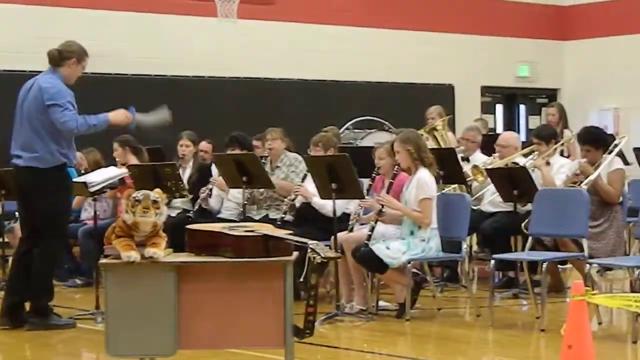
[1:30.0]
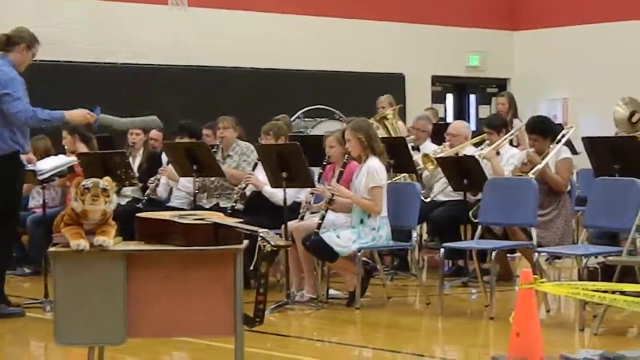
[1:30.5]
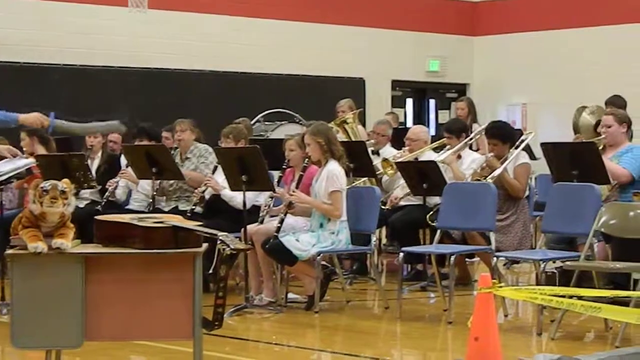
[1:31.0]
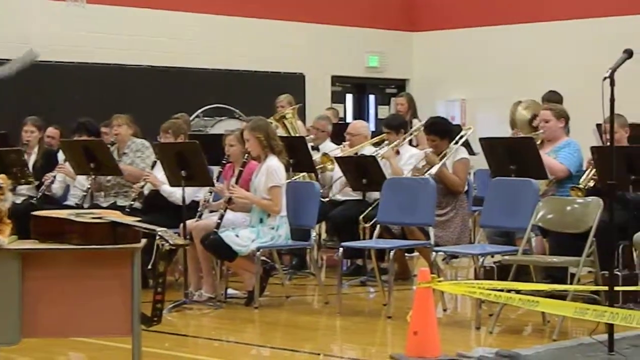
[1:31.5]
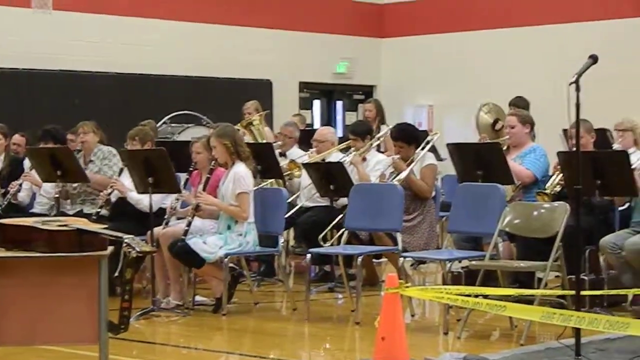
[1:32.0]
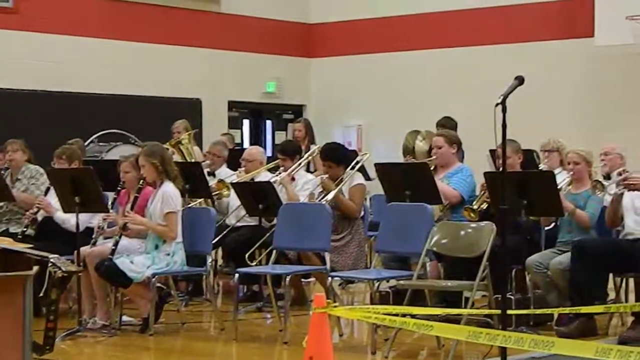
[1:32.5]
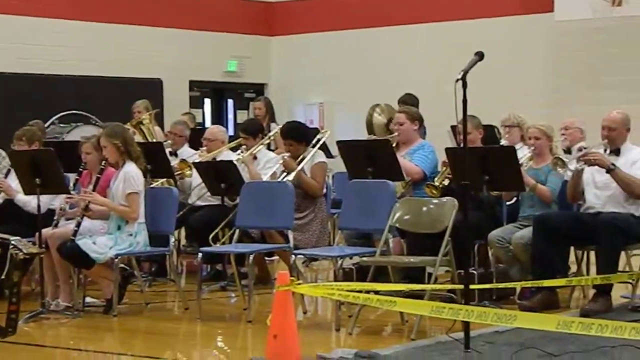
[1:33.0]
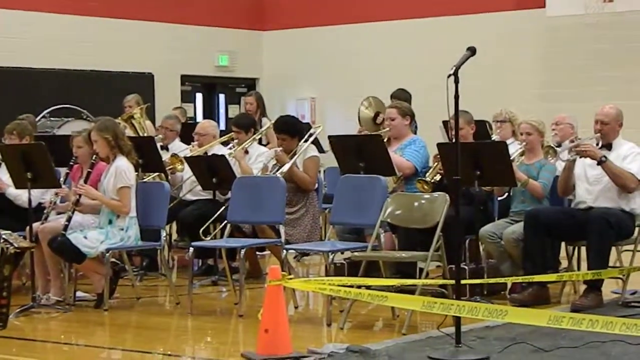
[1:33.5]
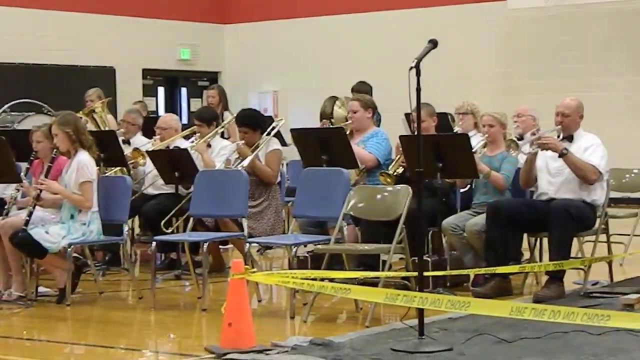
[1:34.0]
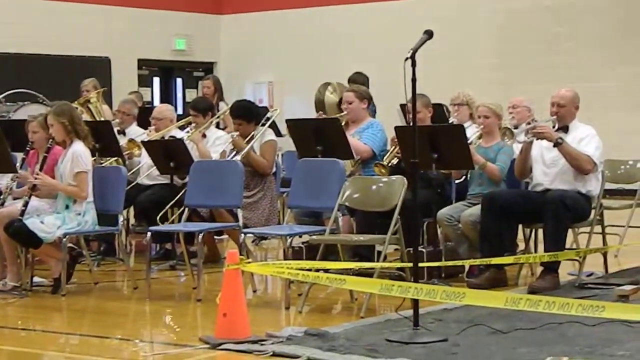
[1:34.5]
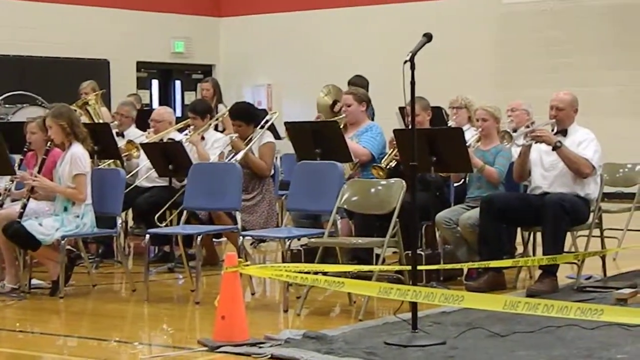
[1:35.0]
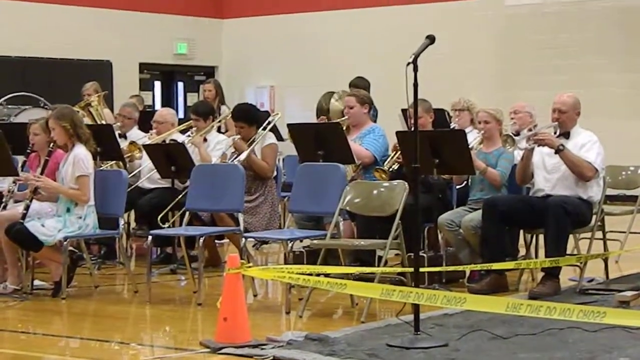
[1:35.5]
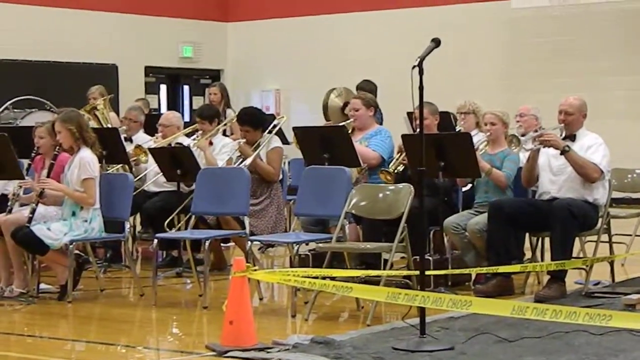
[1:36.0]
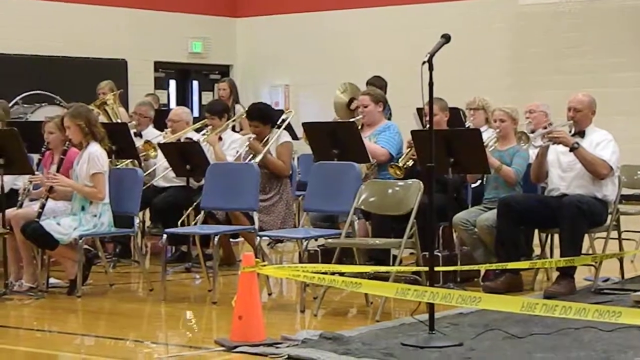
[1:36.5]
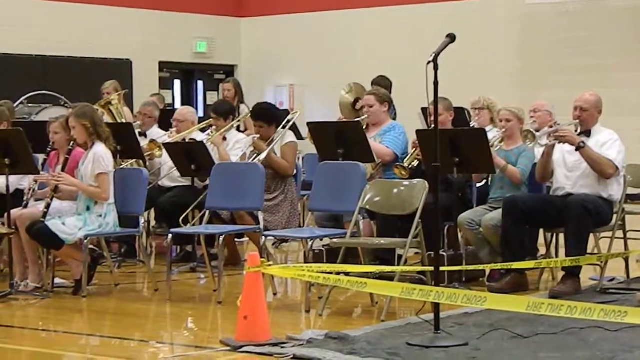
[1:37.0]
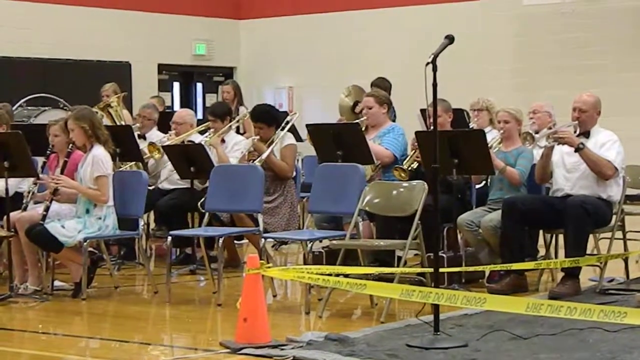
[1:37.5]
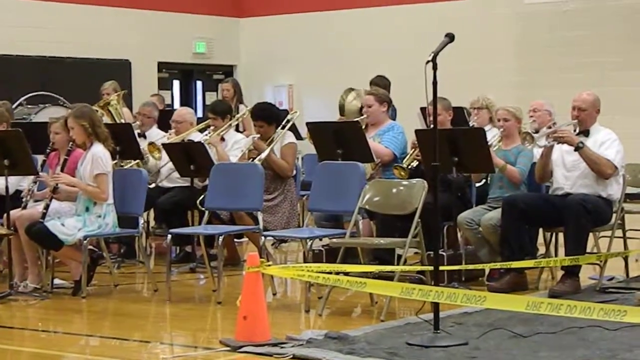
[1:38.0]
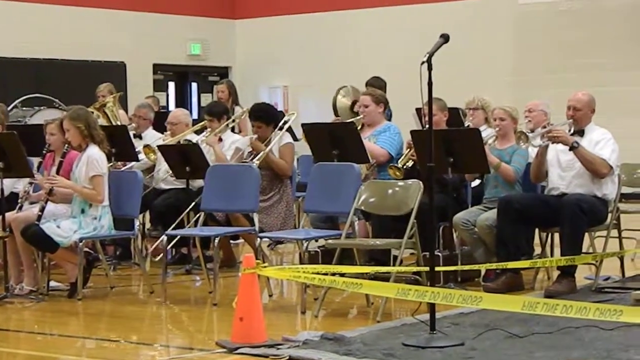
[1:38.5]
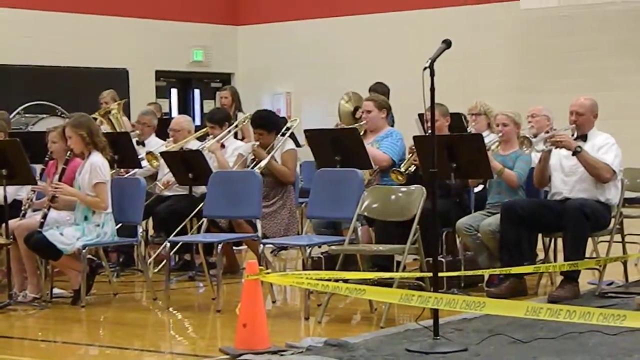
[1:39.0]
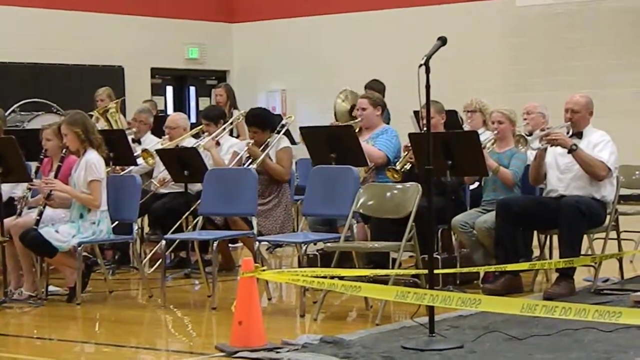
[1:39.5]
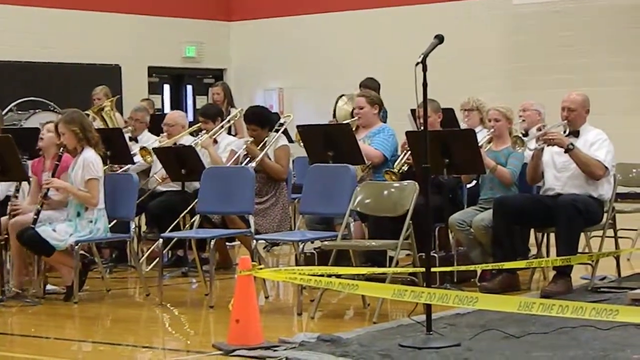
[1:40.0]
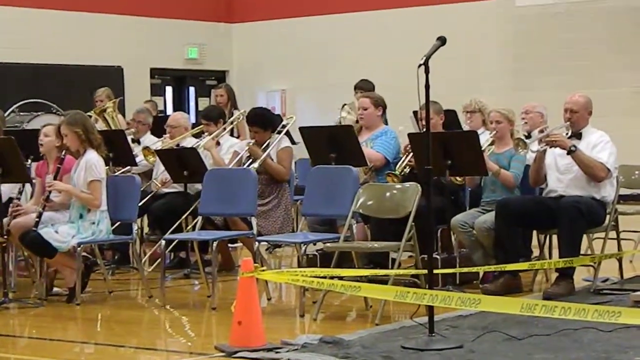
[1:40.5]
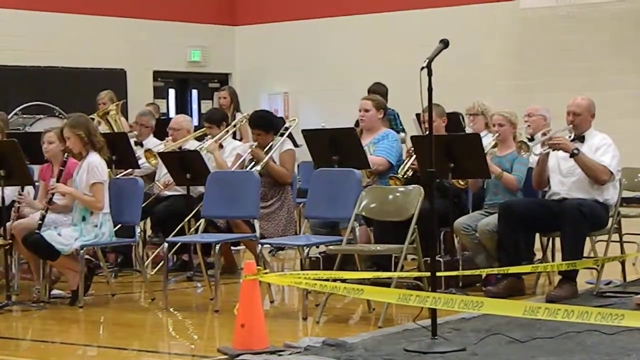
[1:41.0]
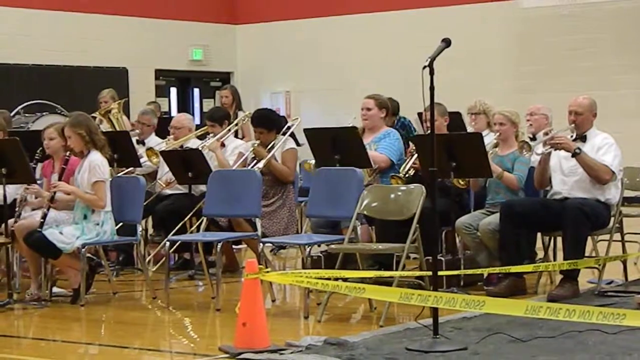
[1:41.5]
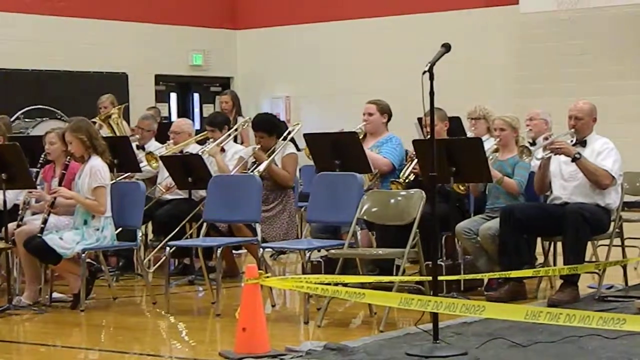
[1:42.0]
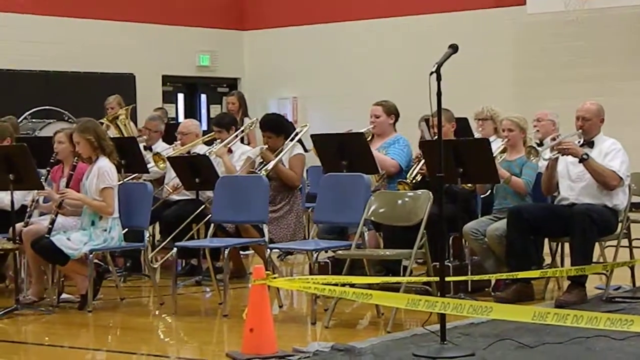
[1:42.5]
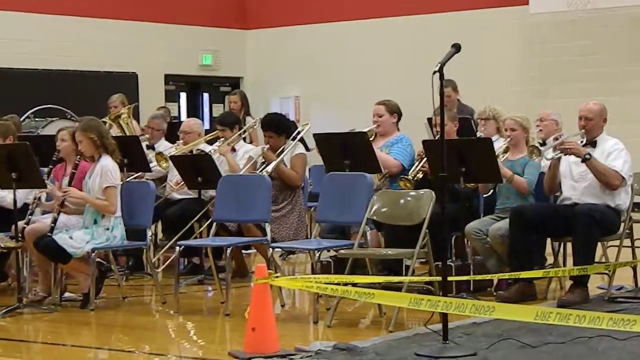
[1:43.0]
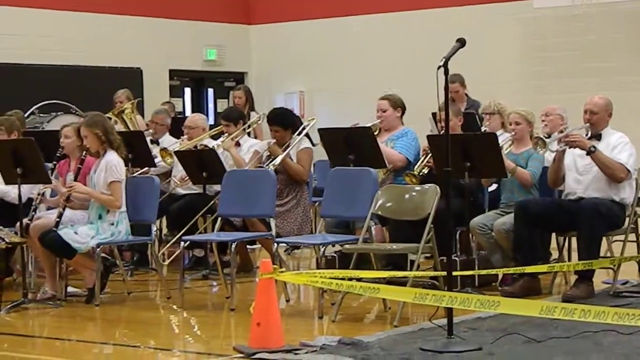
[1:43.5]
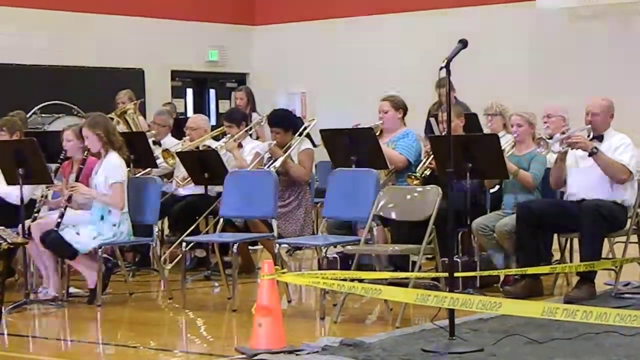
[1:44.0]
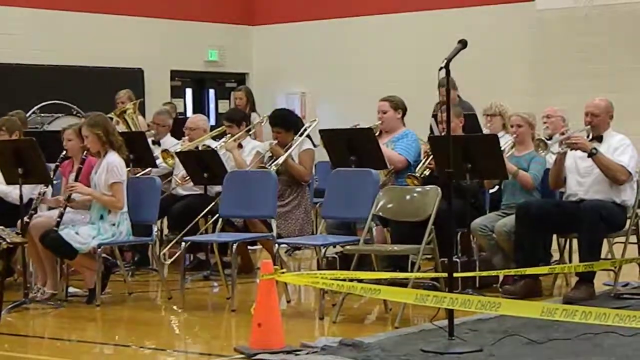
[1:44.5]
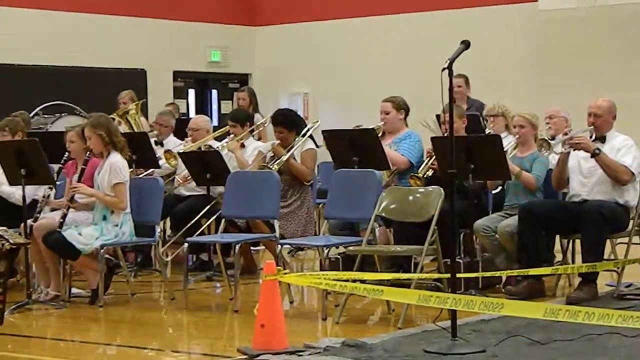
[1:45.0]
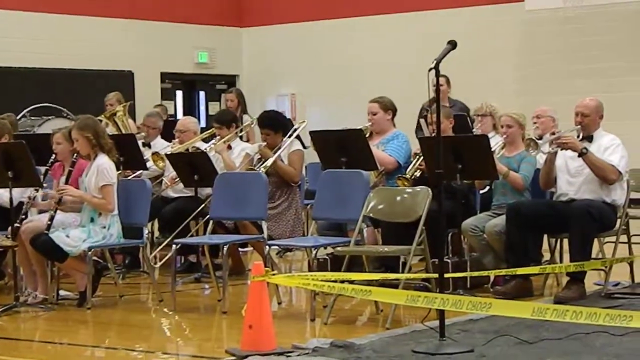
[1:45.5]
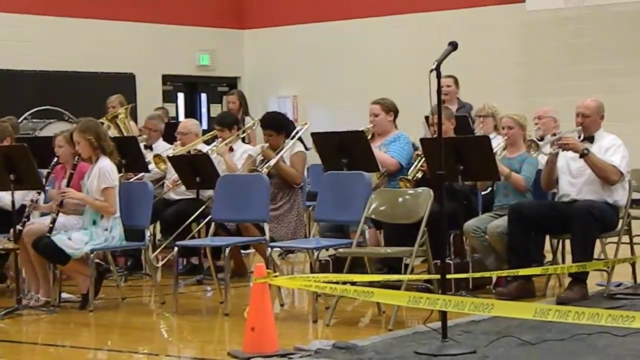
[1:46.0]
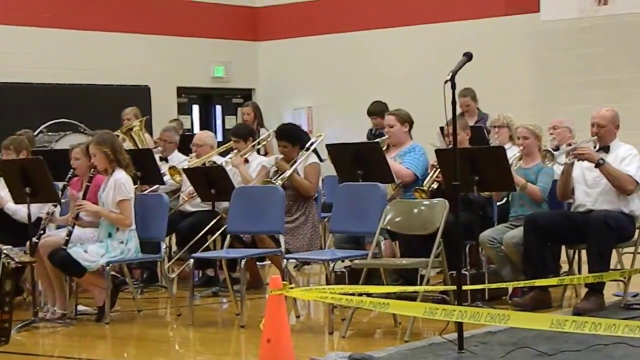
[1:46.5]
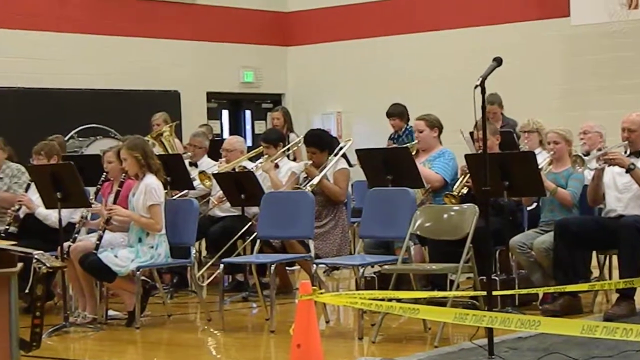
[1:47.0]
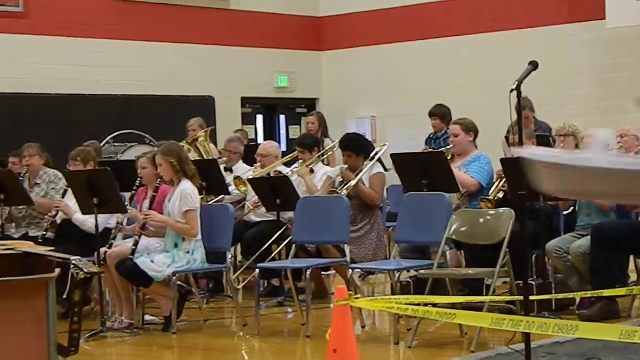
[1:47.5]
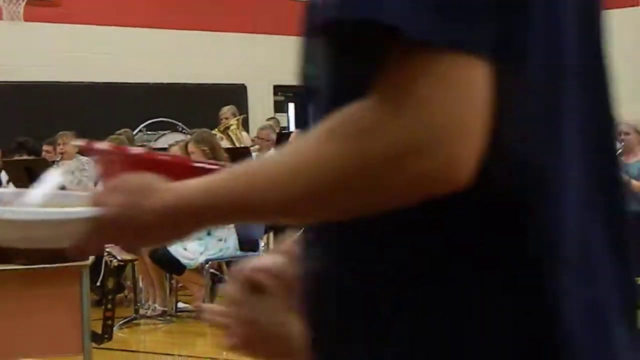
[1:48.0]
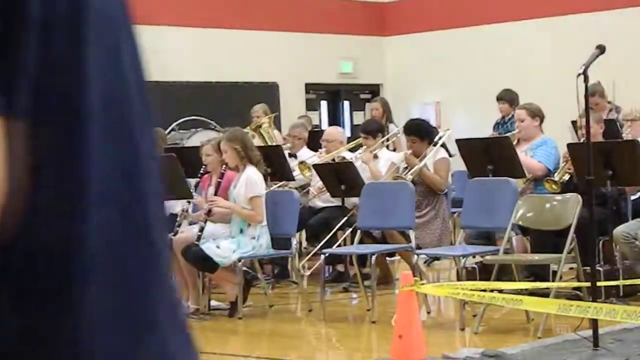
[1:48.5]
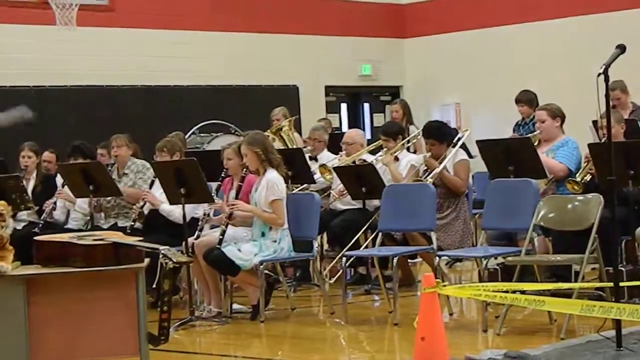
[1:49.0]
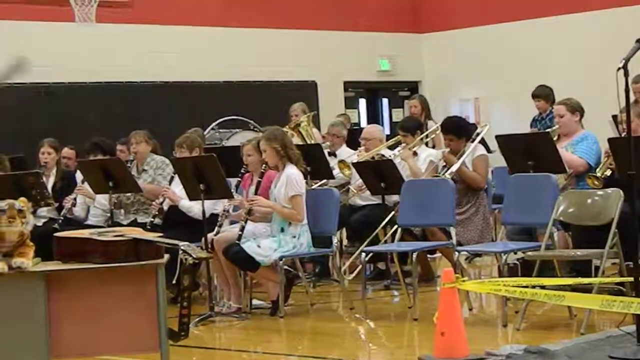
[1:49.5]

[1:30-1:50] A man continues conducting what looks like a school or amateur band in a gymnasium. As he stands at the front conducting with a plastic toy sword, the camera pans to the right, showing band members playing brass instruments; men and women play horns. Behind them is someone with cymbals. To the right, in front of the performers, is an area cordoned off with yellow police tape, with a microphone on a stand in it. All of the band members are seated with music stands in front of them, except for the cymbal players, who stand in the back. At one point someone holding a plate of food appears to walk in front of the camera. Behind the players, basketball hoops hang from two of the gymnasium walls, and double doors with an exit sign above them are in the corner. A desk at the front of the room, in front of the band members, has a stuffed tiger and a guitar resting on it, and the conductor stands at the front behind a podium.